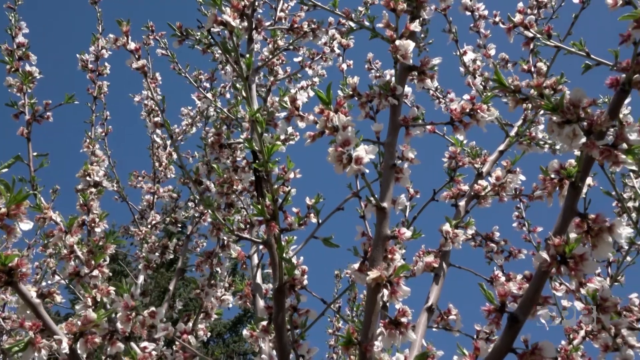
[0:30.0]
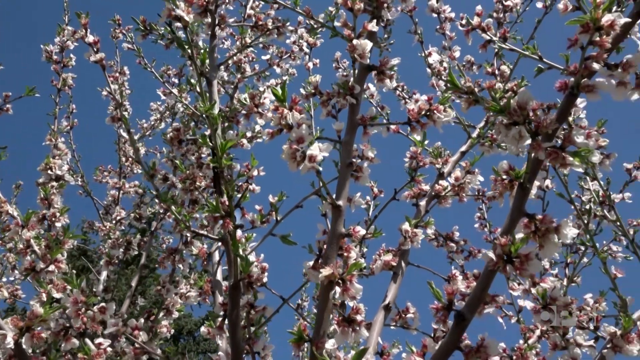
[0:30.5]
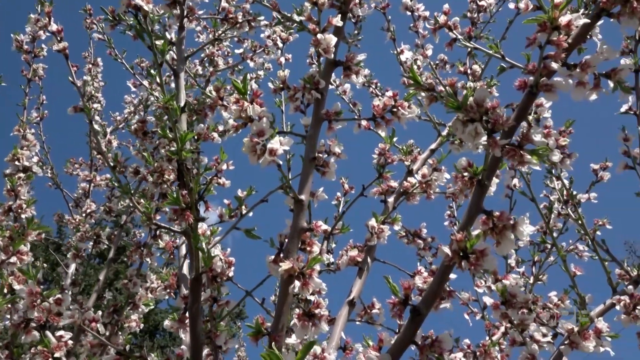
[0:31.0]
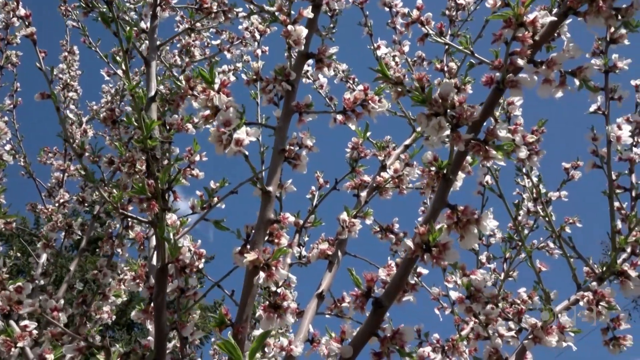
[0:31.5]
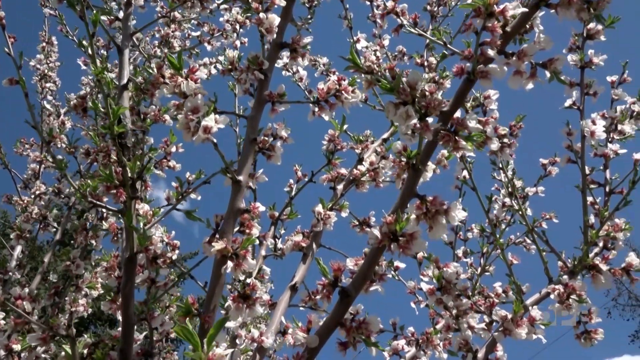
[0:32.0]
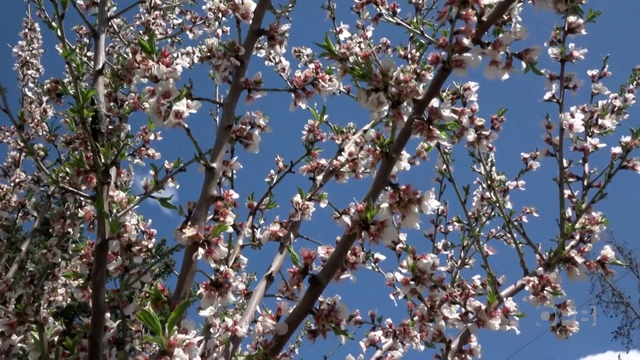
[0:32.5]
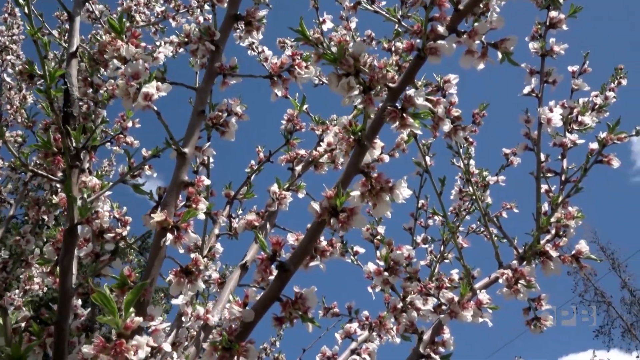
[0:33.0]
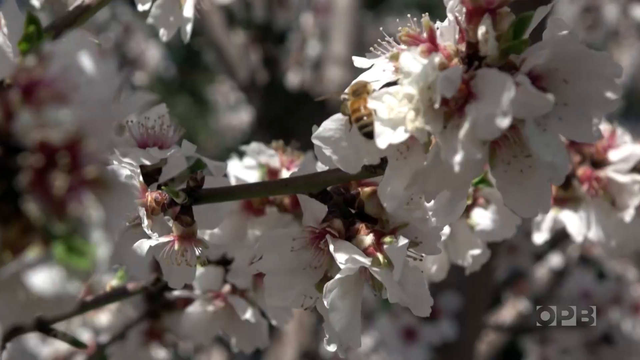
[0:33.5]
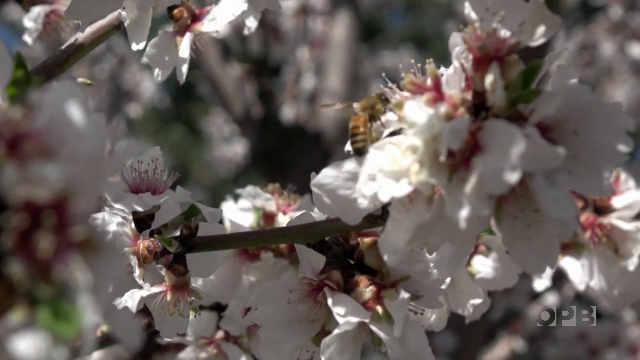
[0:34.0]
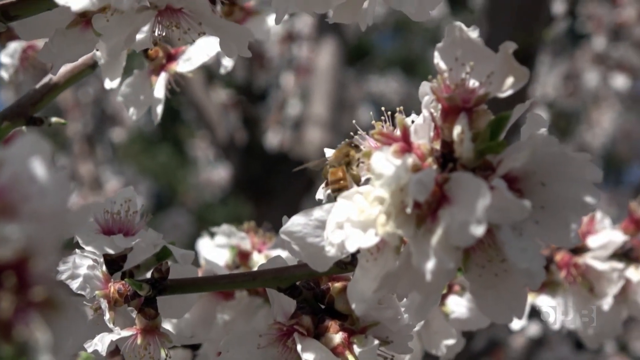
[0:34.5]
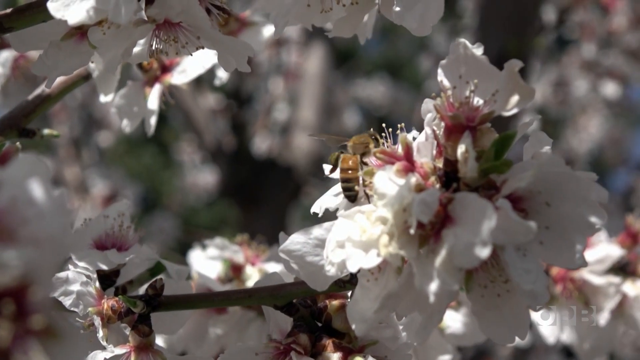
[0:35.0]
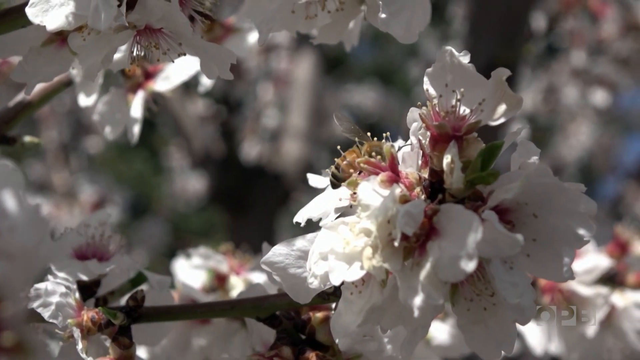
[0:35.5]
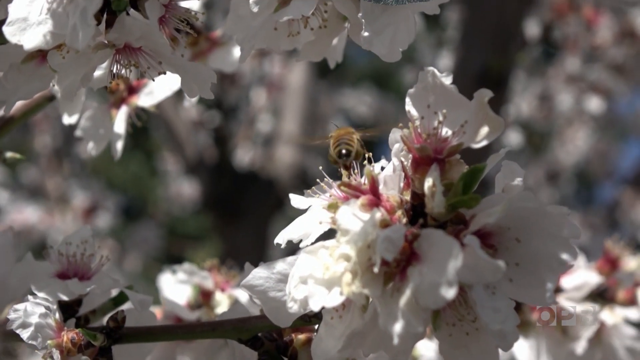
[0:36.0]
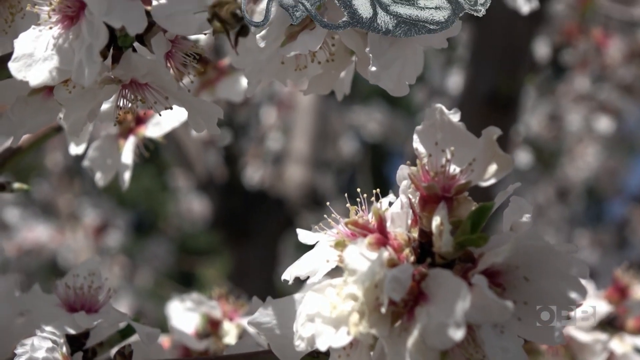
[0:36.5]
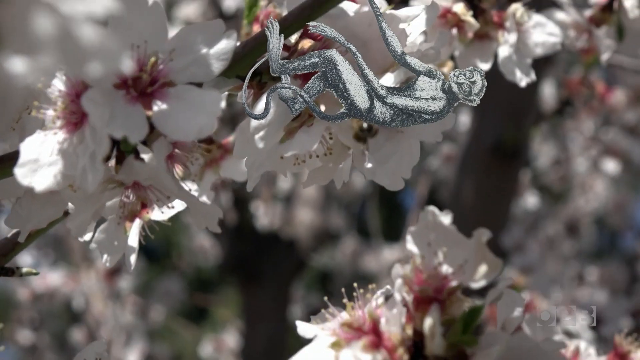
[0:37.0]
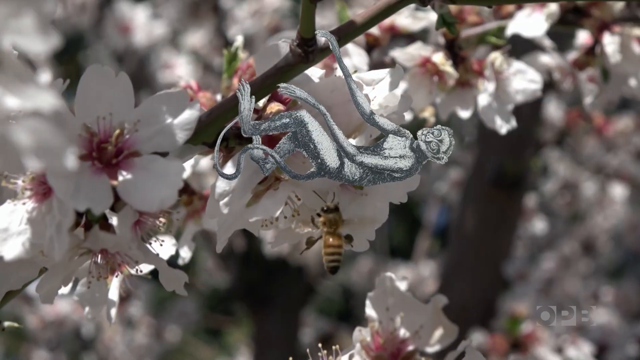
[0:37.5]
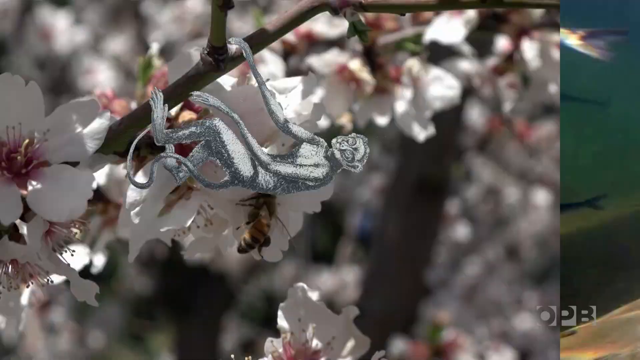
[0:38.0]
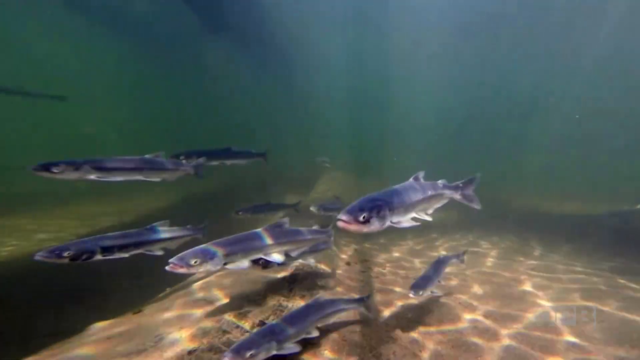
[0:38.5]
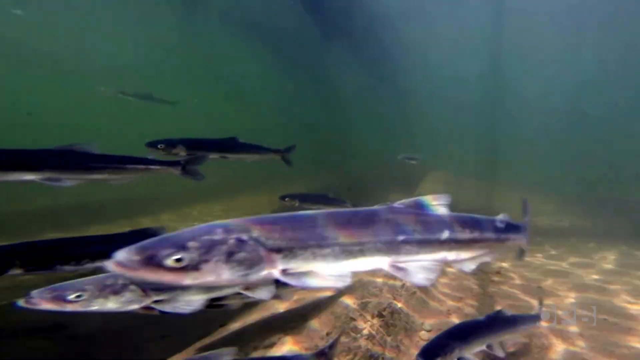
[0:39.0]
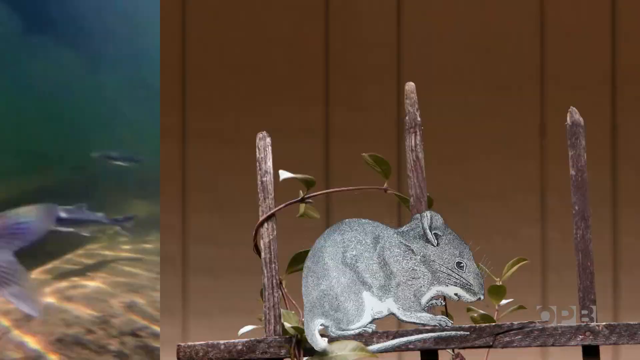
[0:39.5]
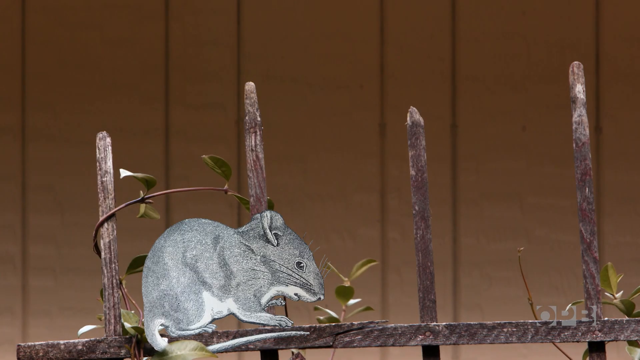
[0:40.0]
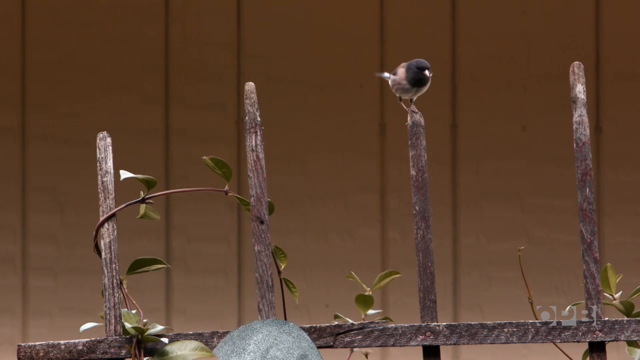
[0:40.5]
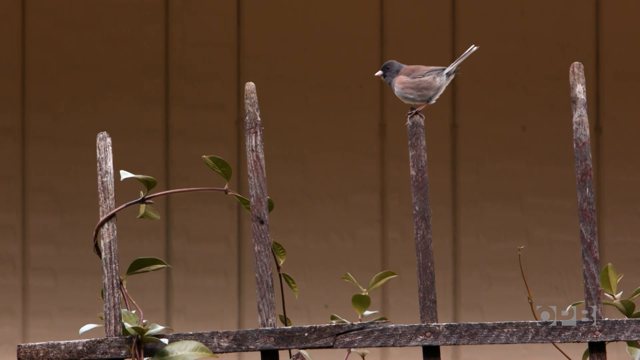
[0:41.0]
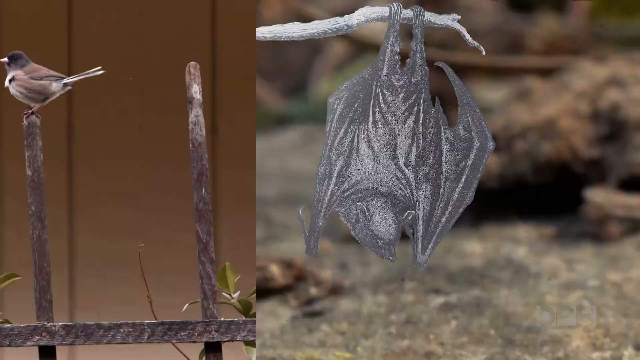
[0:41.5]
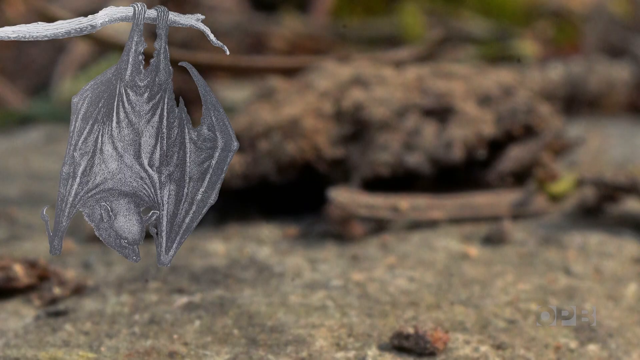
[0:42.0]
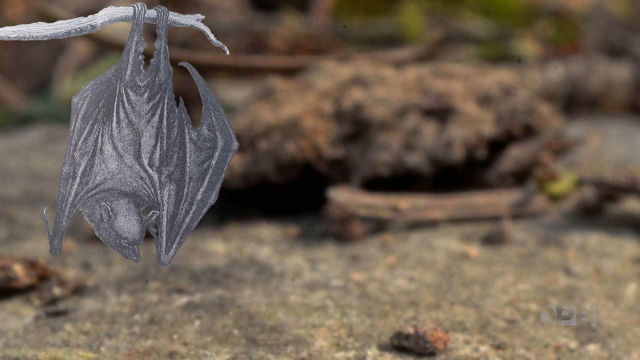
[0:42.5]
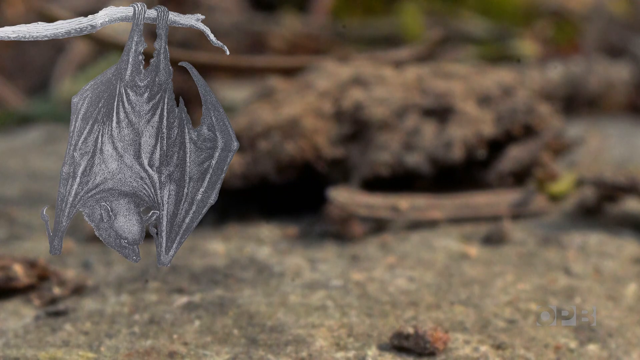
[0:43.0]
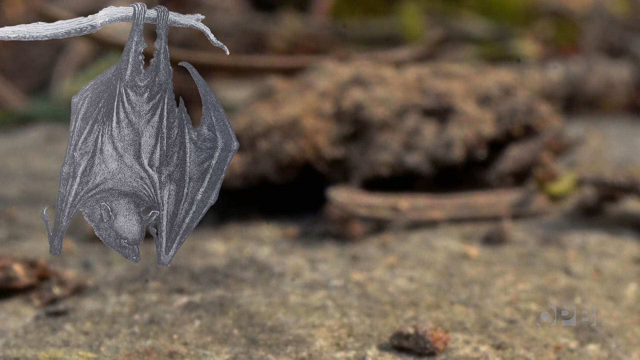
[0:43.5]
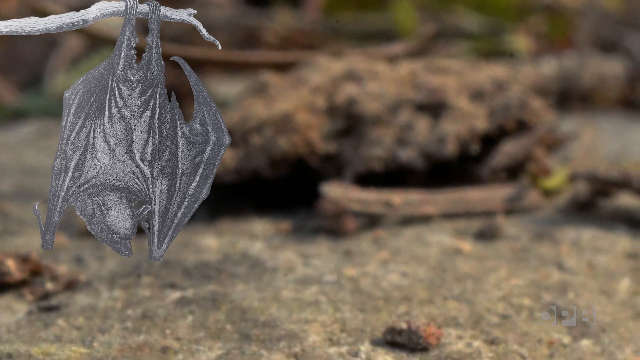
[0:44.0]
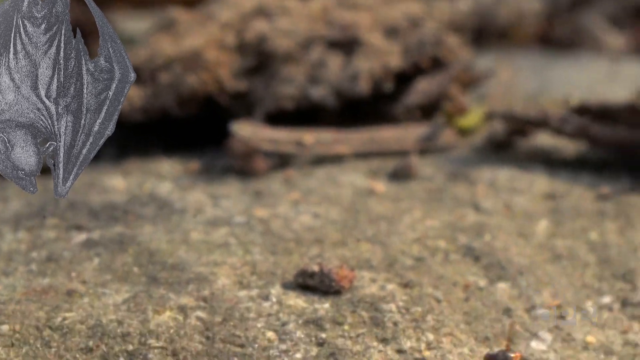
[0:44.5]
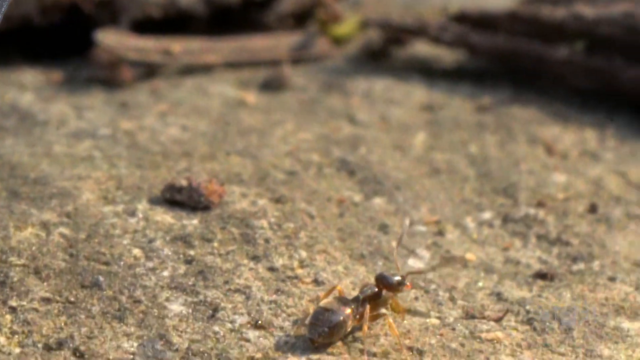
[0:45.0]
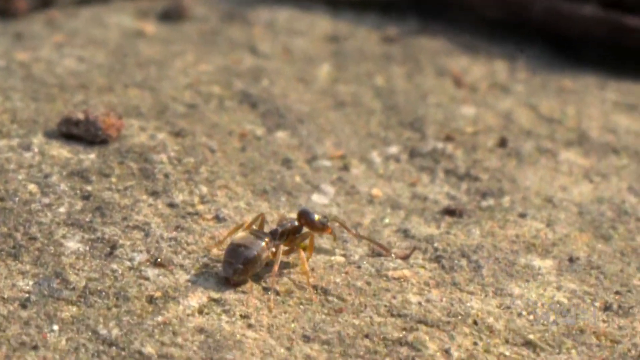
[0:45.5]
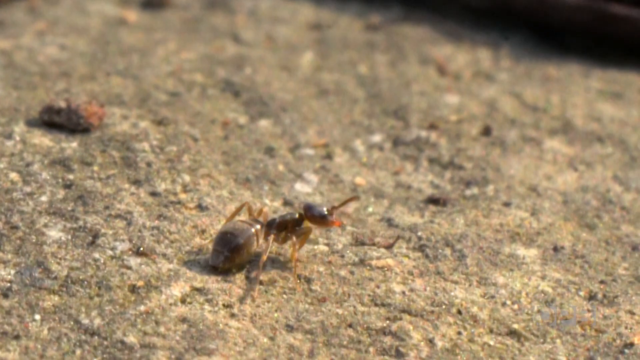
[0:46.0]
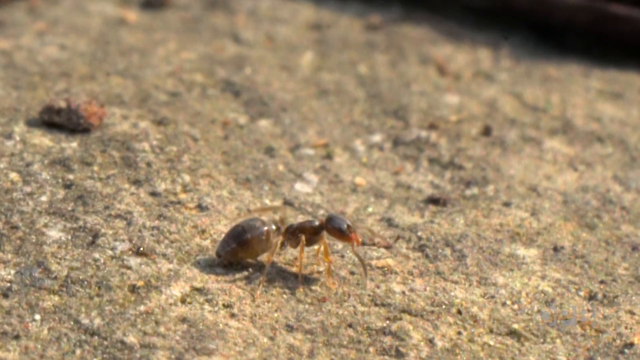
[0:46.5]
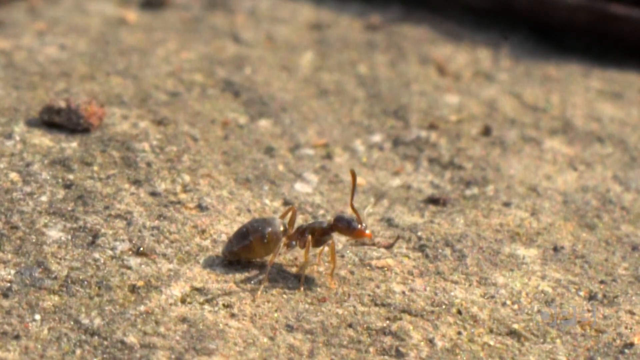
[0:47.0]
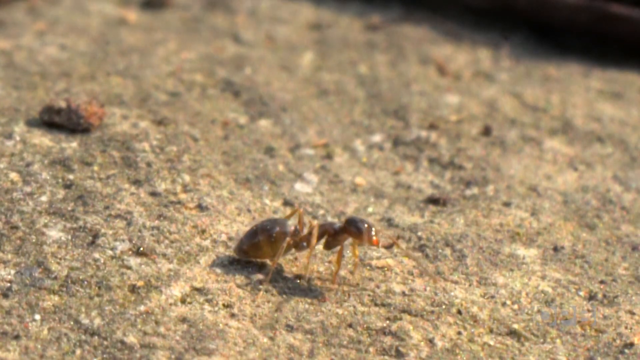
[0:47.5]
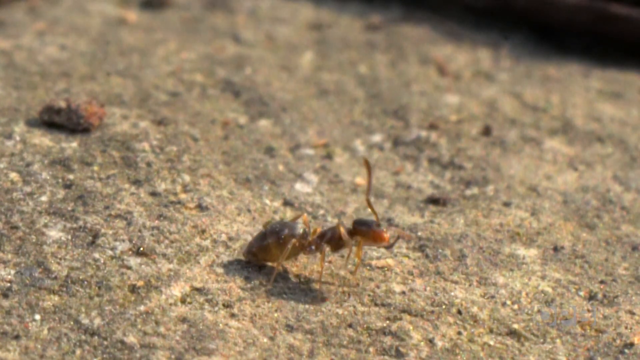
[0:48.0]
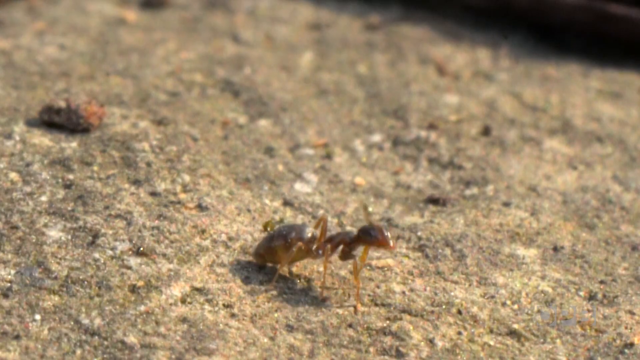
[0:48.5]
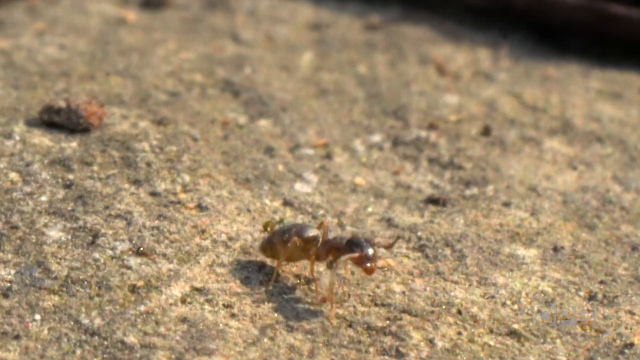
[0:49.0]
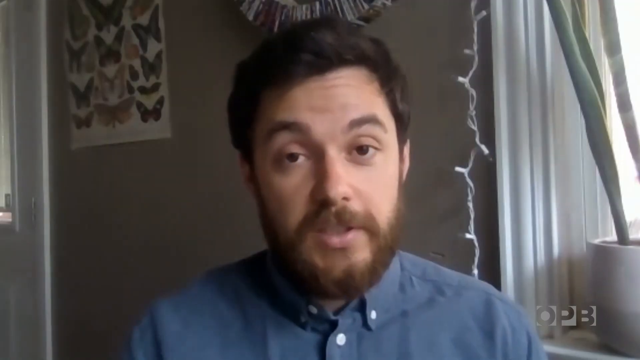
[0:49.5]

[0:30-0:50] A tree is in bloom with bees on its flowers. The video then shows fish in the ocean, a mouse, a bird, and a bat hanging upside down. An ant walks oddly and moves its antennae; it seems to be walking on a rock. In the flowering tree there is what looks like a little toy paper monkey, and the mouse also seems to be made of paper.